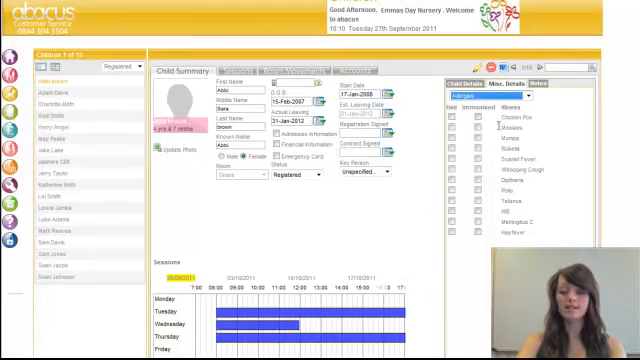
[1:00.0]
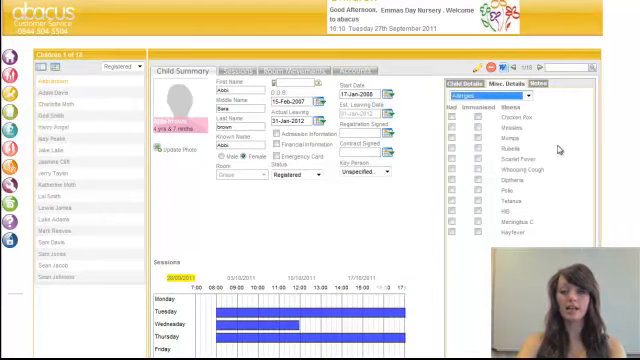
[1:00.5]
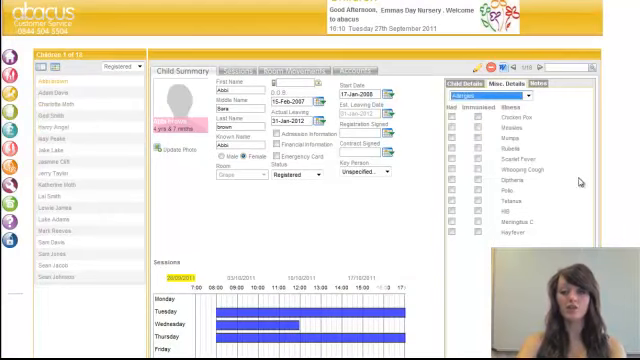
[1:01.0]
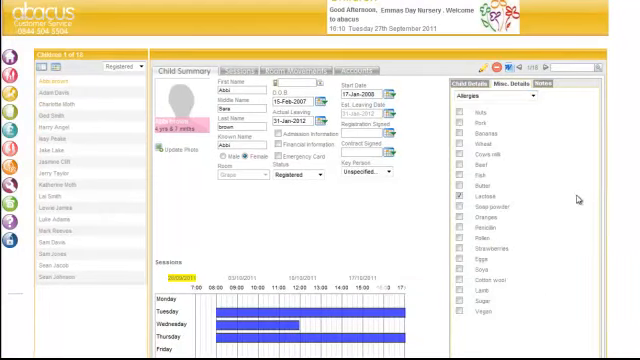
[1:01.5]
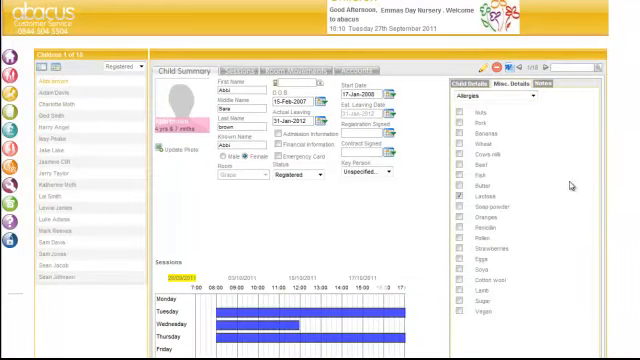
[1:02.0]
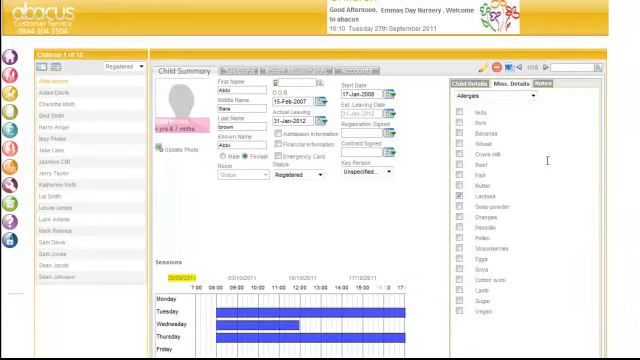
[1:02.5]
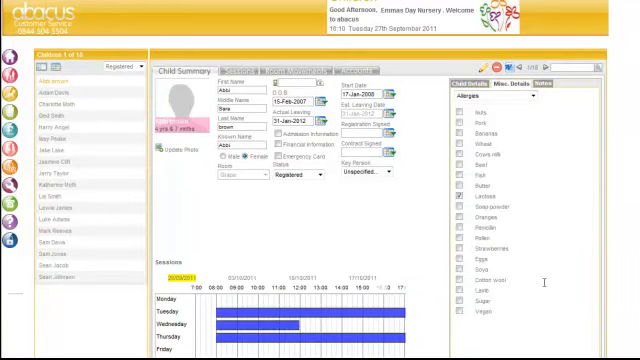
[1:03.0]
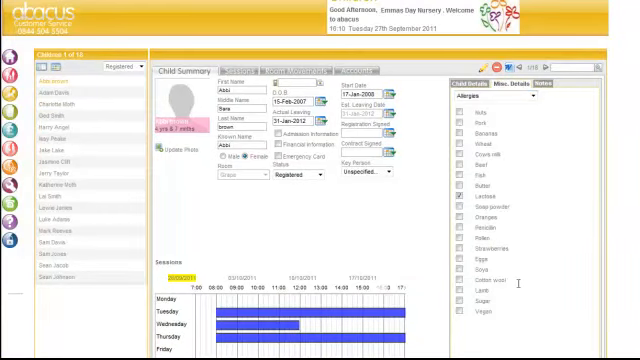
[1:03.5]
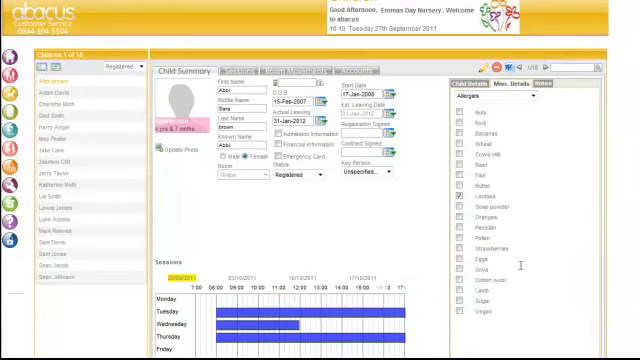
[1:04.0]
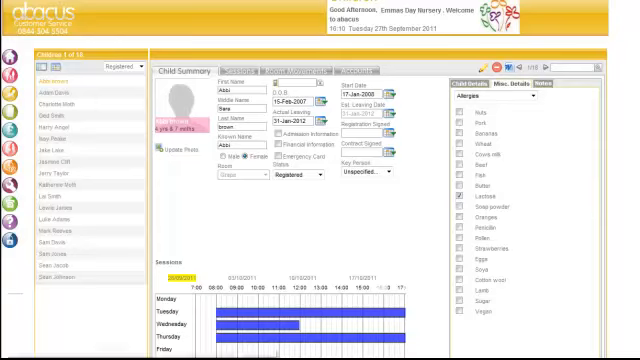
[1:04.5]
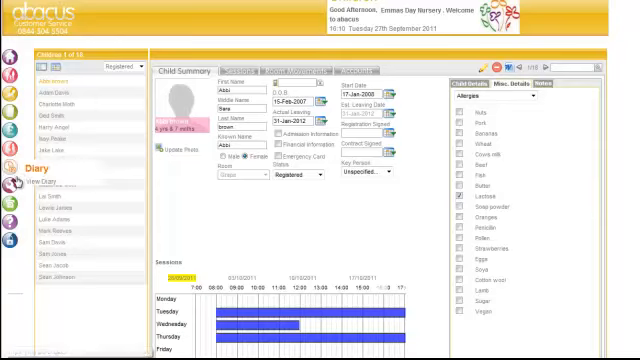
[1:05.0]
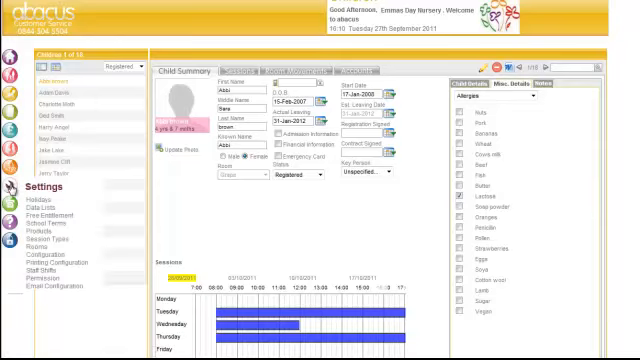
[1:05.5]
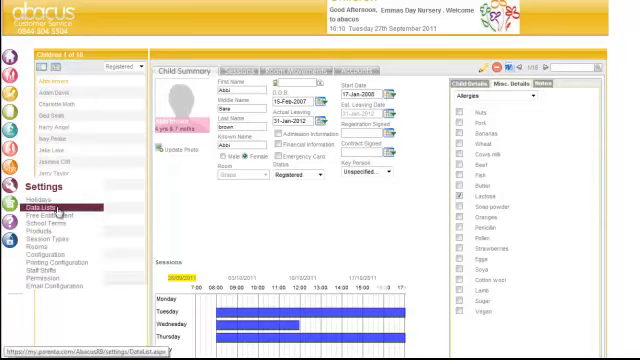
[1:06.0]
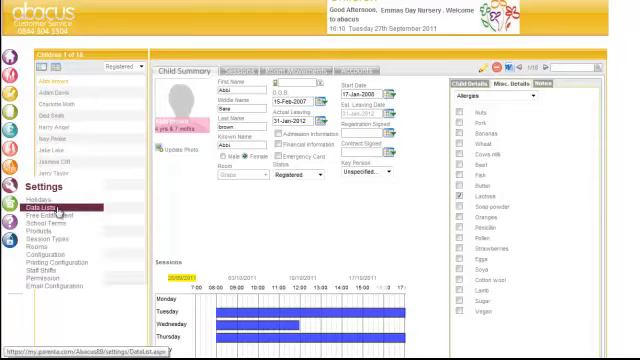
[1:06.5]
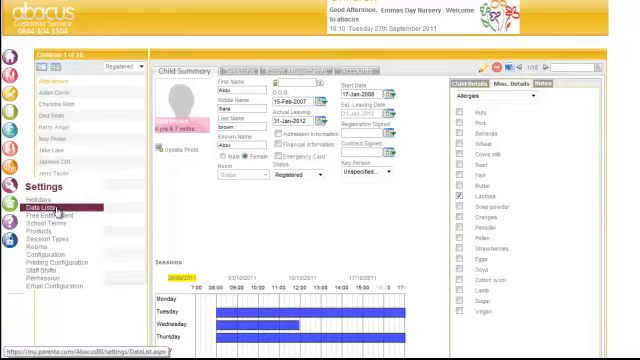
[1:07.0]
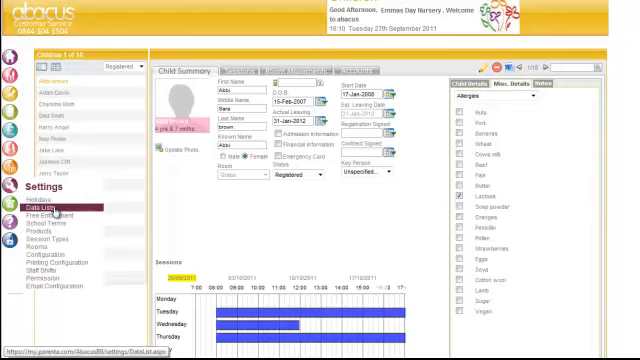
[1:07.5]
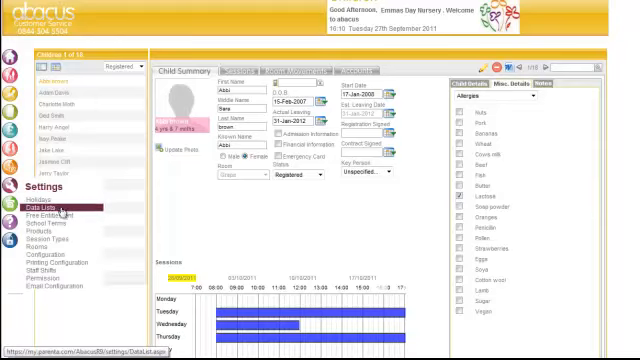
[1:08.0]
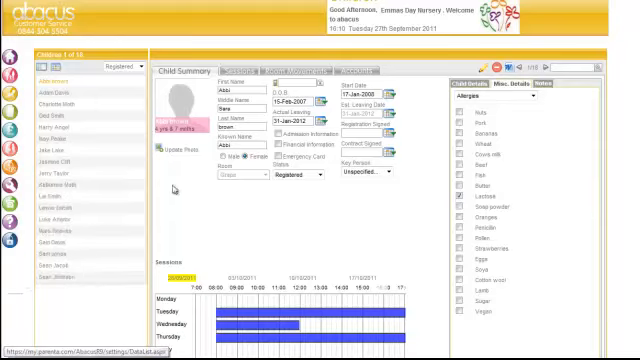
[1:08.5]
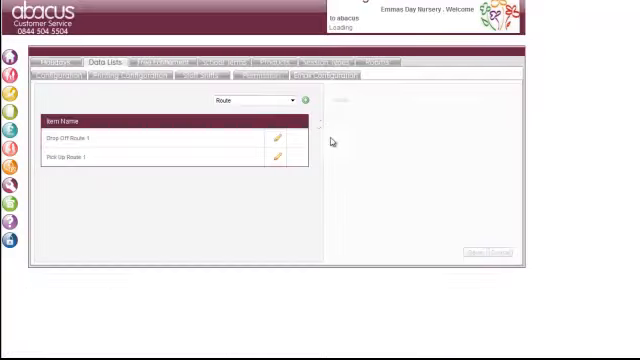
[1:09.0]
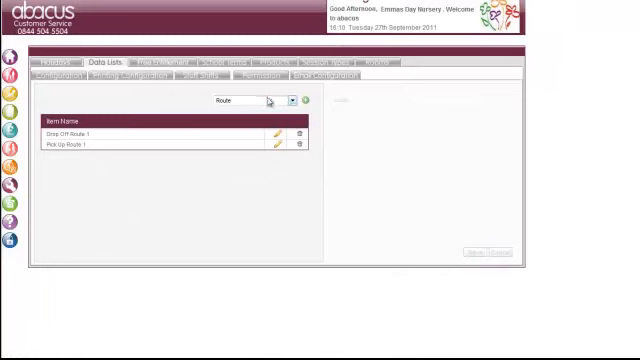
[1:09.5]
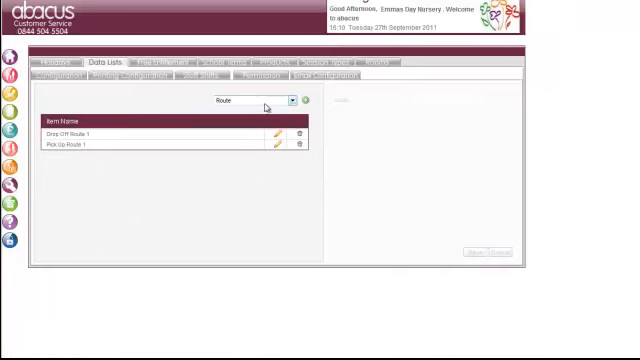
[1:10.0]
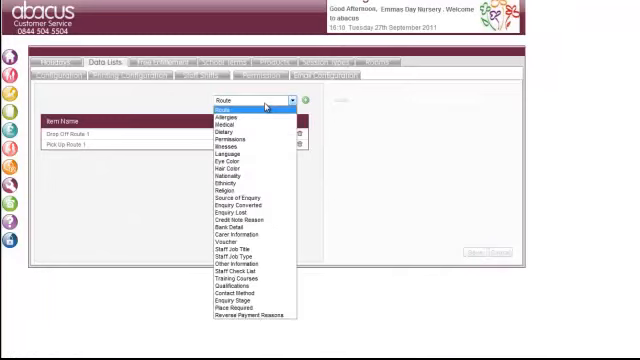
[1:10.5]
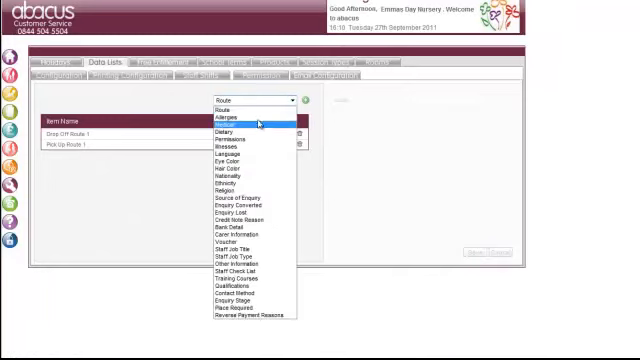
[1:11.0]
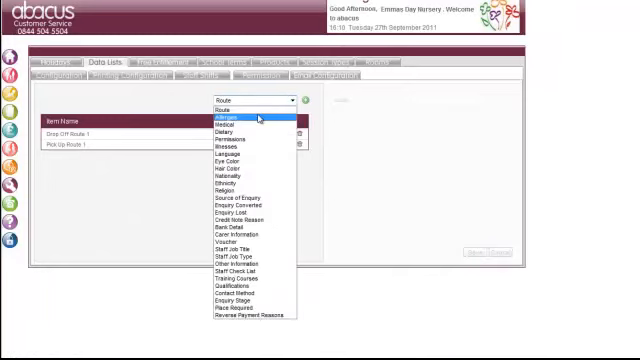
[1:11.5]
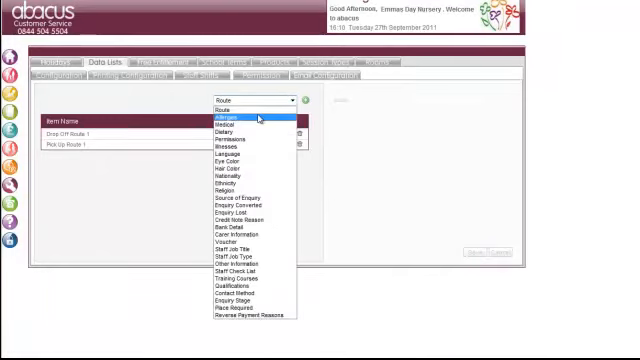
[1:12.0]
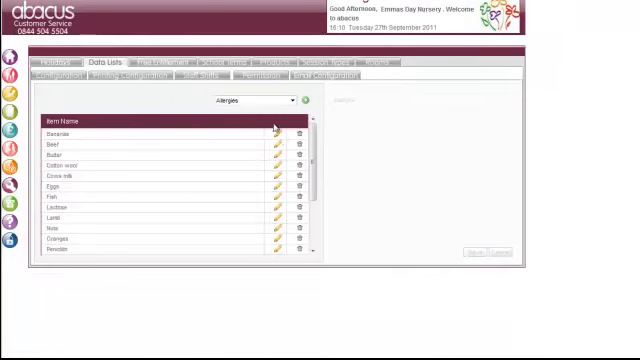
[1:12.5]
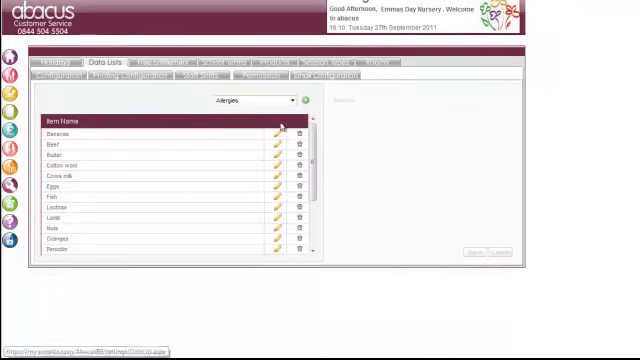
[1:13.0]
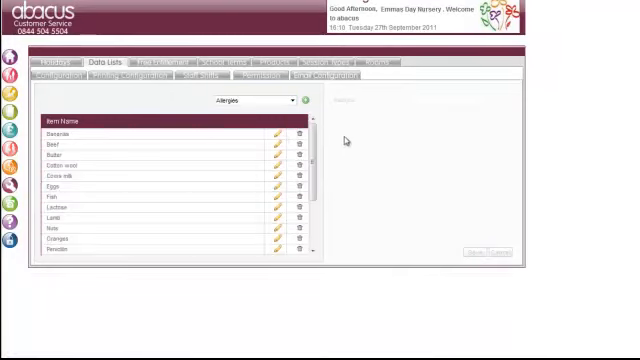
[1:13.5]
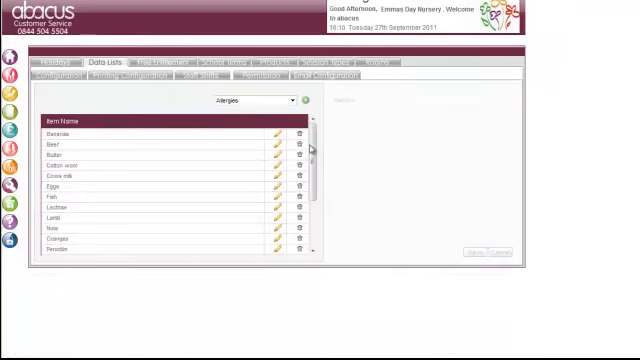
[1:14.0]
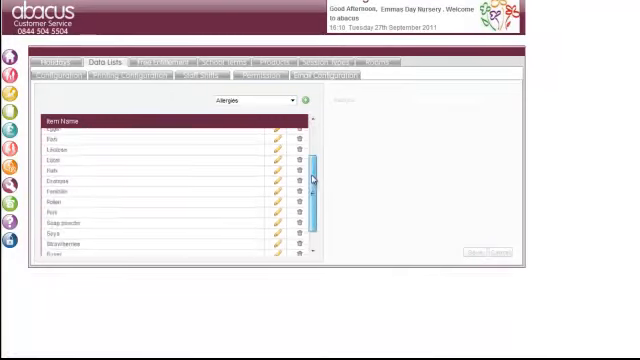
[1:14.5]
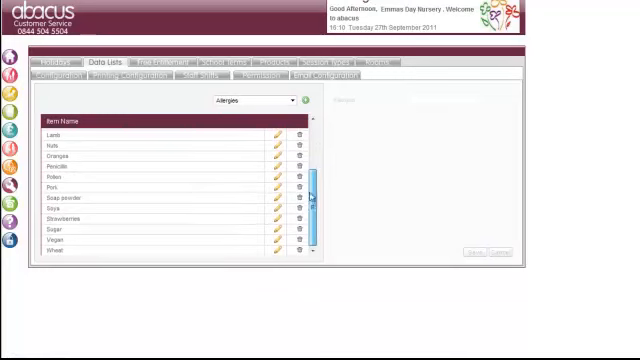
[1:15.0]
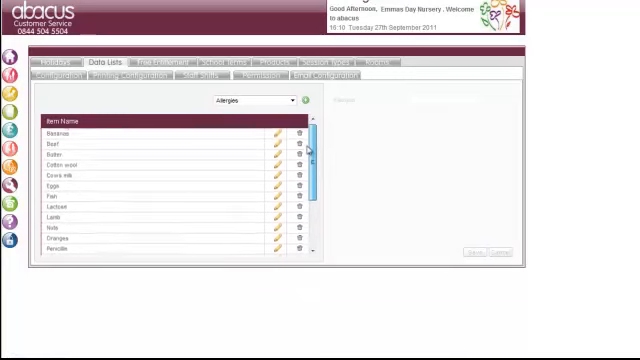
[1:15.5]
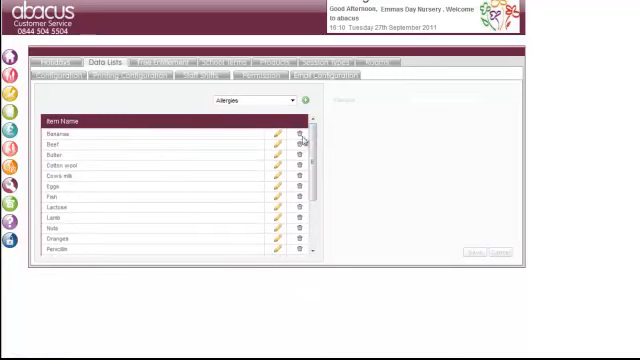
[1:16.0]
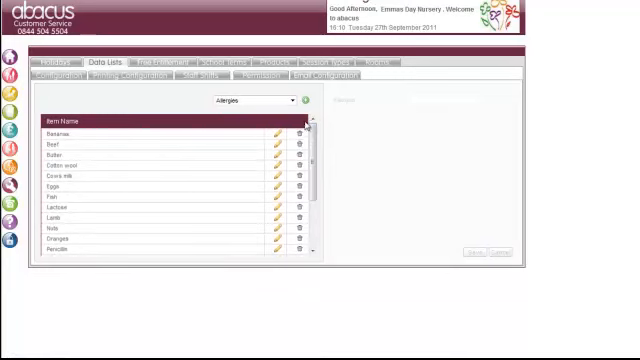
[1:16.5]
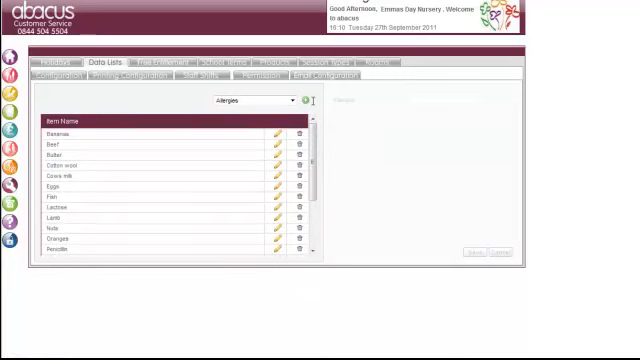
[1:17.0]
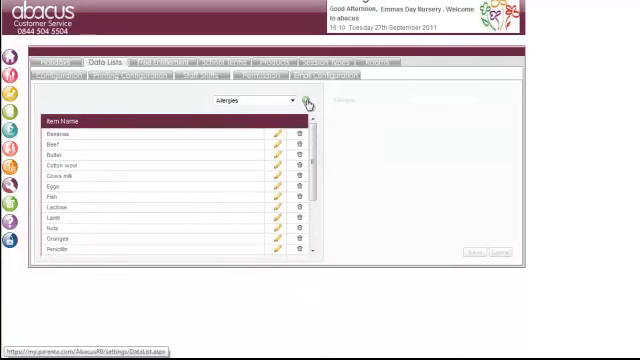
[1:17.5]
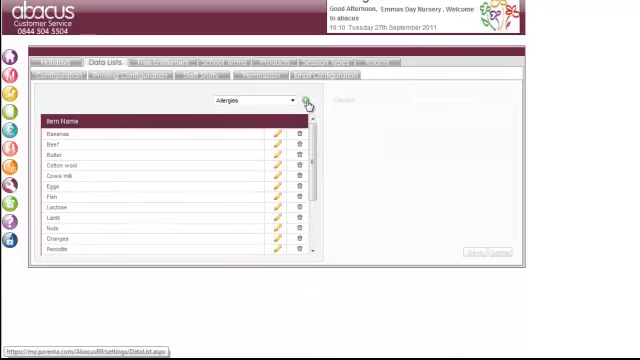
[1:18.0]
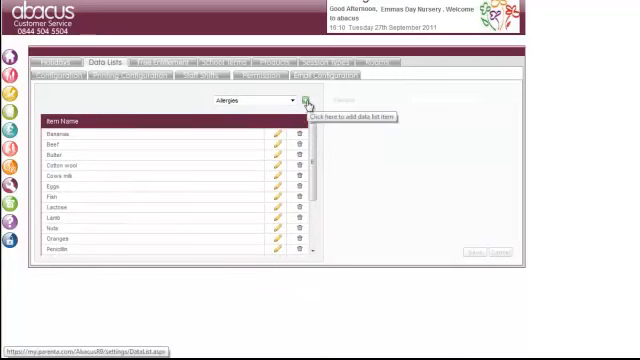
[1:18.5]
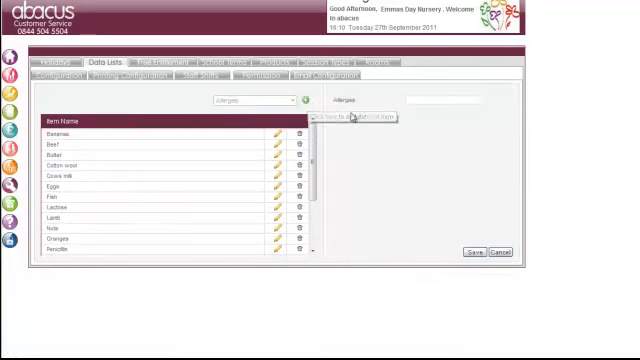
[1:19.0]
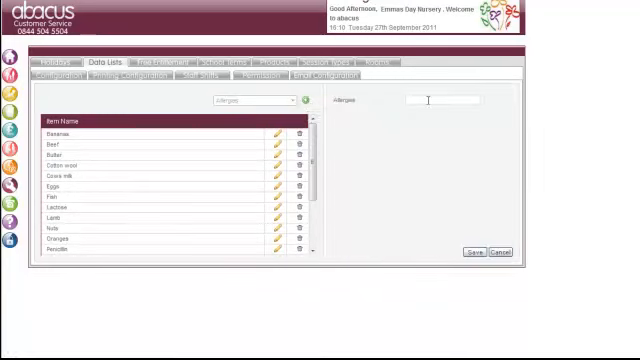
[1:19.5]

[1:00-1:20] The woman is visible at first, but after about five seconds she is gone. On the site, she clicks a settings icon on the left side and chooses data lists, moving to another part of the Abacus customer service site, which has a red color. In the data list she opens the allergy option, showing a list of food allergies. She clicks a plus icon to add a data list item, which lets her add another option to the allergy list. After that she goes back to the previous page, then again opens the settings icon, data lists and allergies, showing the list of allergies, and again clicks the plus icon to make a new allergy.